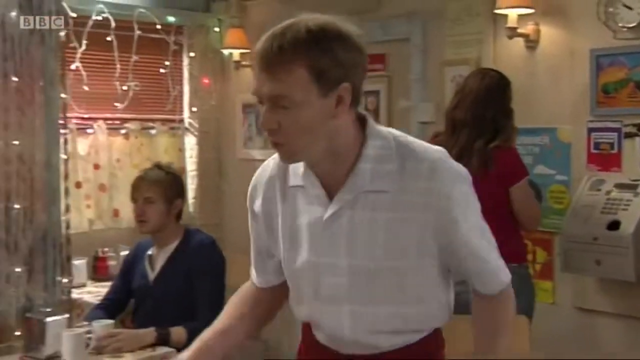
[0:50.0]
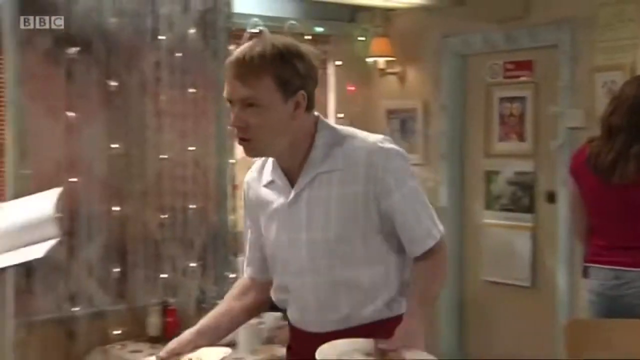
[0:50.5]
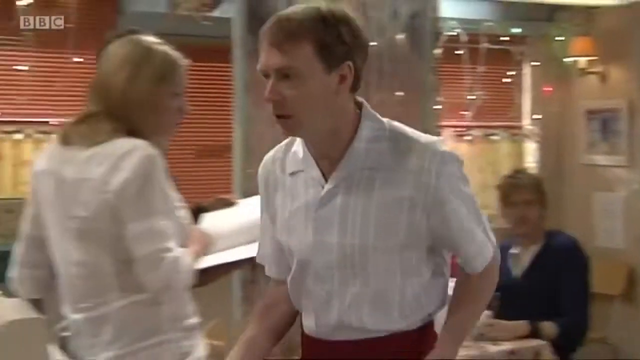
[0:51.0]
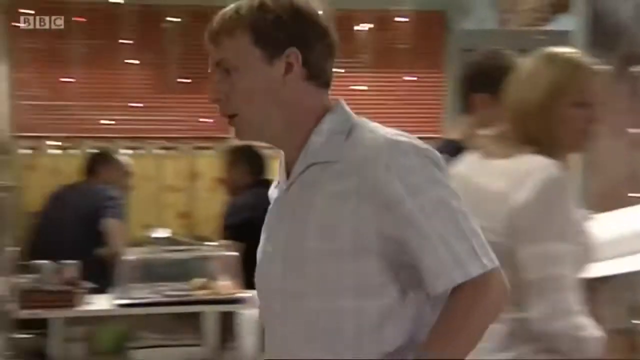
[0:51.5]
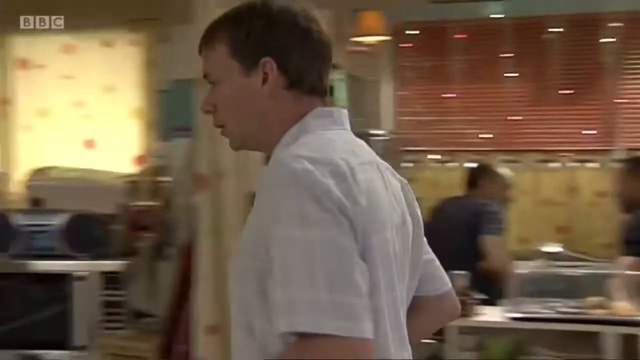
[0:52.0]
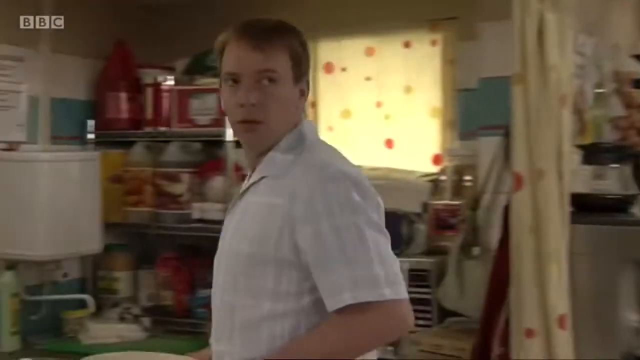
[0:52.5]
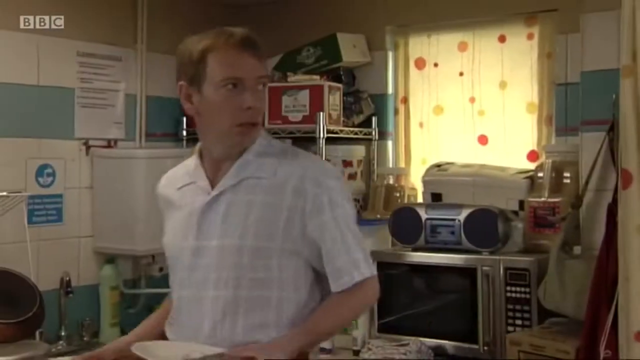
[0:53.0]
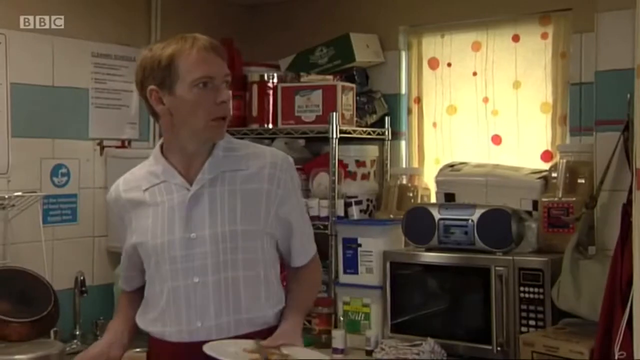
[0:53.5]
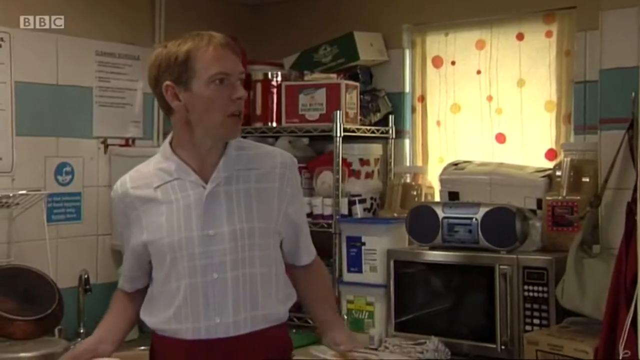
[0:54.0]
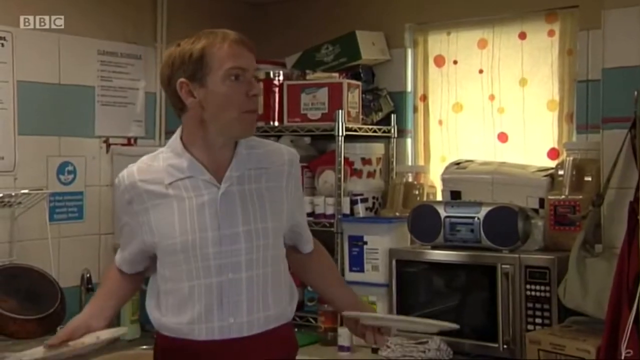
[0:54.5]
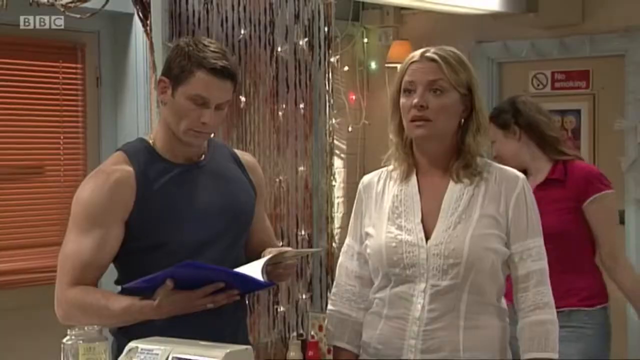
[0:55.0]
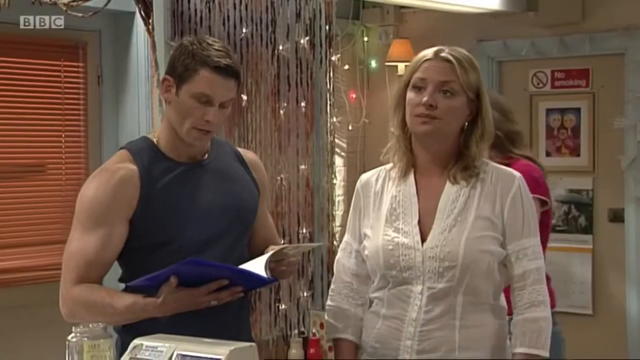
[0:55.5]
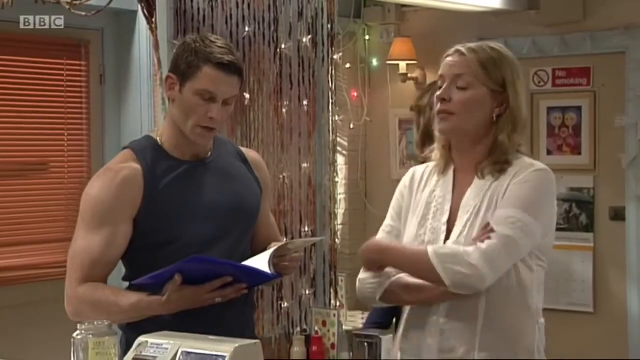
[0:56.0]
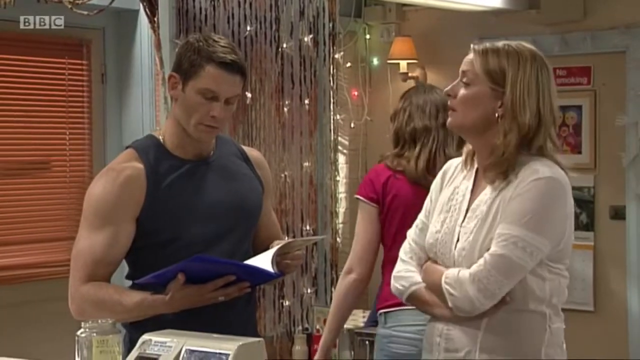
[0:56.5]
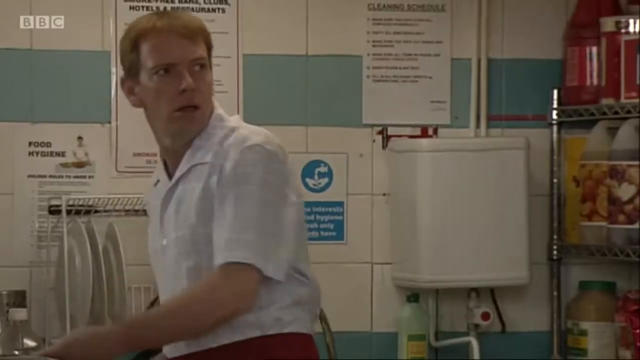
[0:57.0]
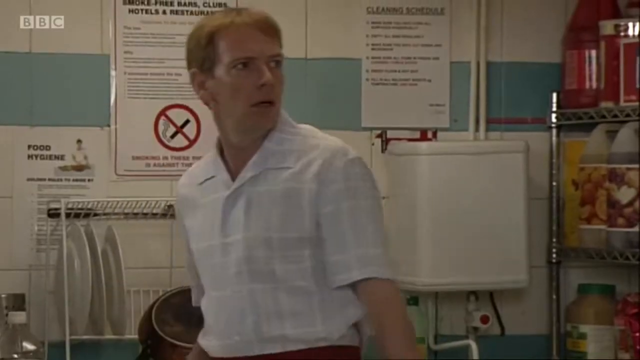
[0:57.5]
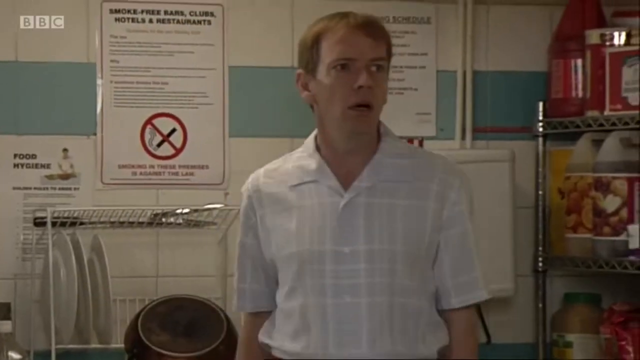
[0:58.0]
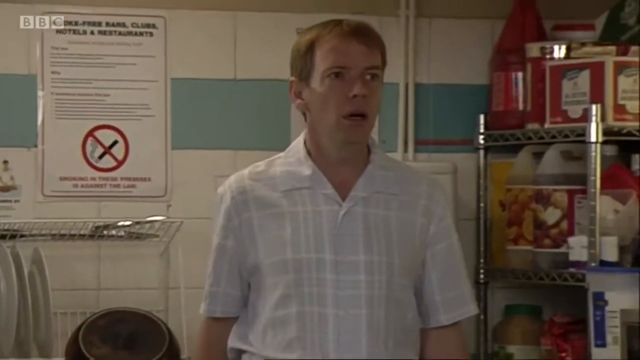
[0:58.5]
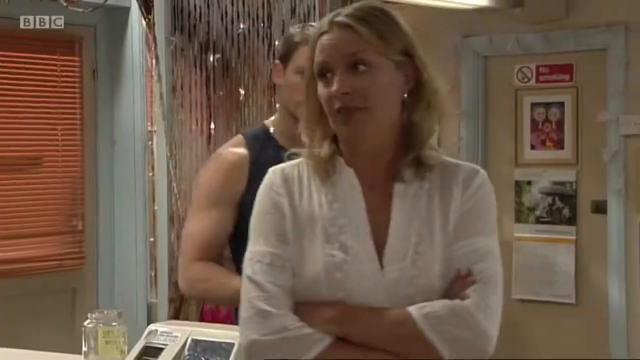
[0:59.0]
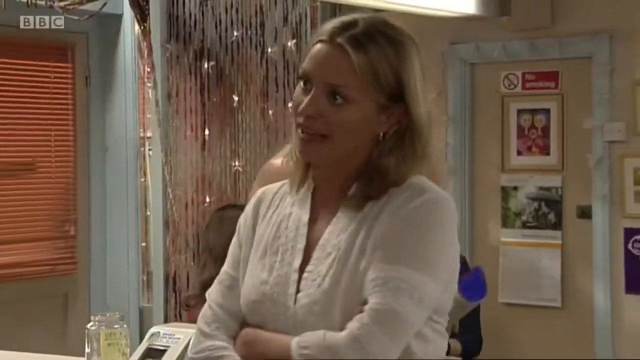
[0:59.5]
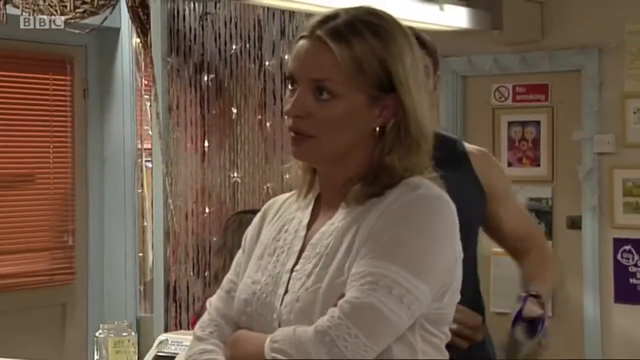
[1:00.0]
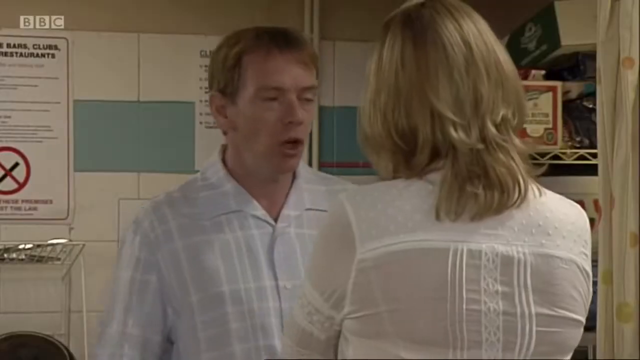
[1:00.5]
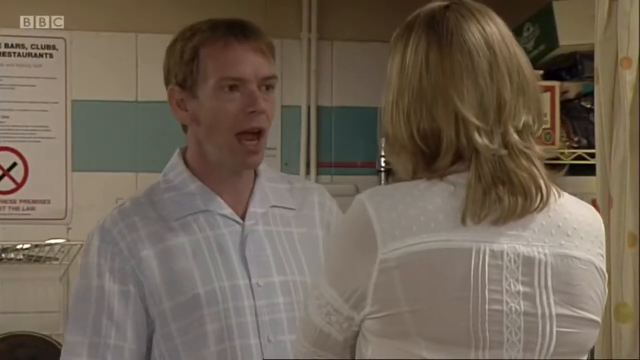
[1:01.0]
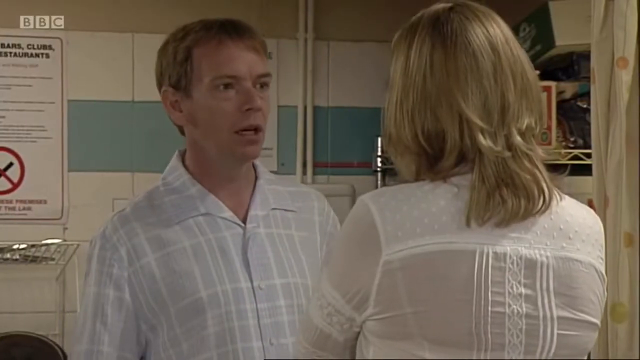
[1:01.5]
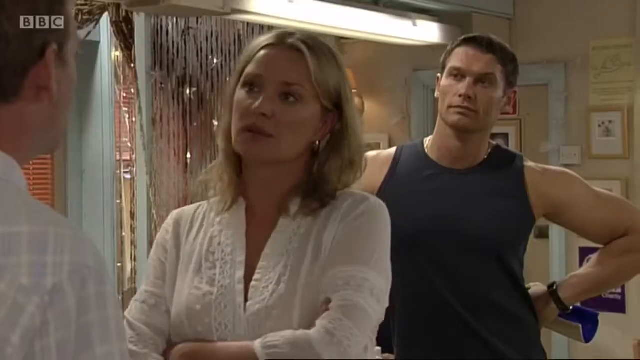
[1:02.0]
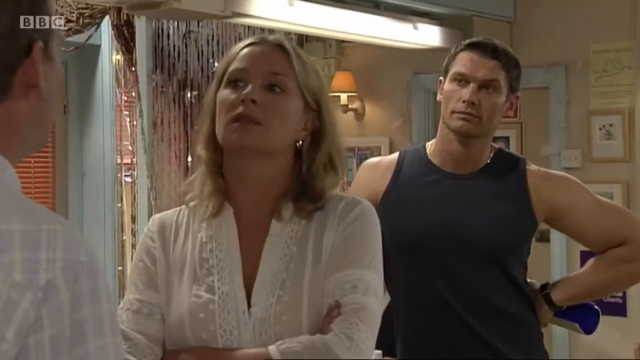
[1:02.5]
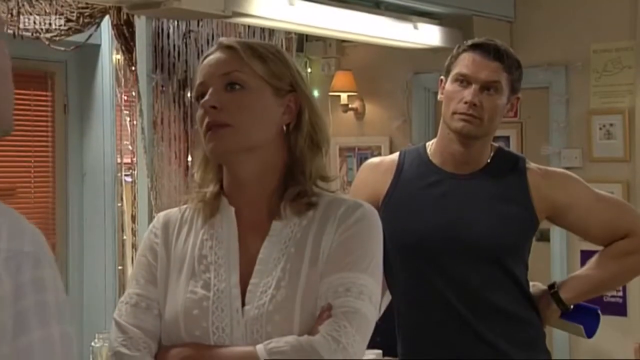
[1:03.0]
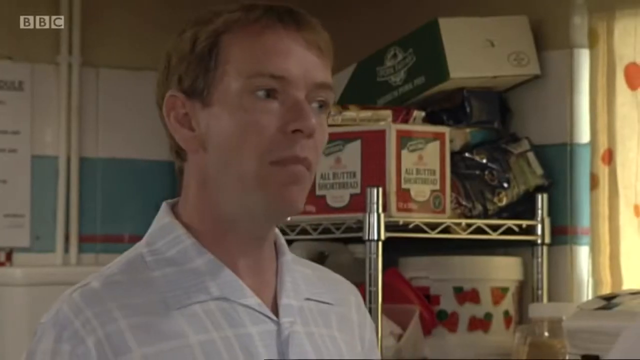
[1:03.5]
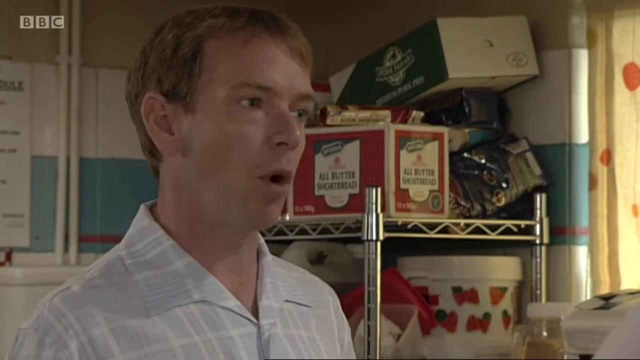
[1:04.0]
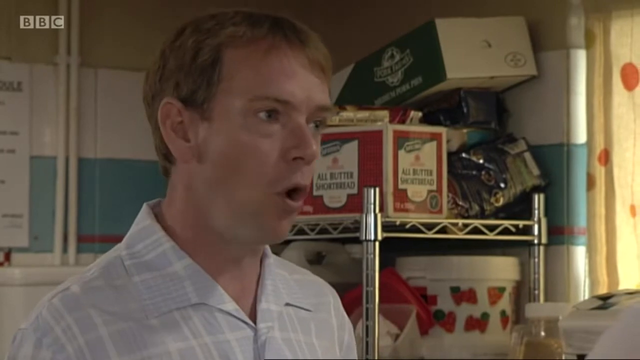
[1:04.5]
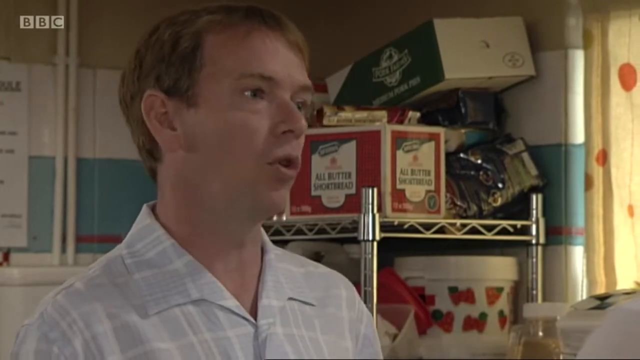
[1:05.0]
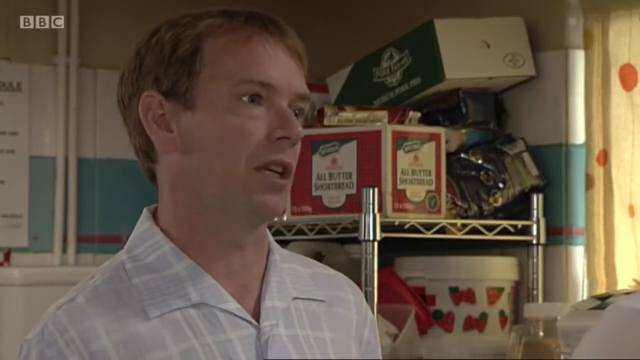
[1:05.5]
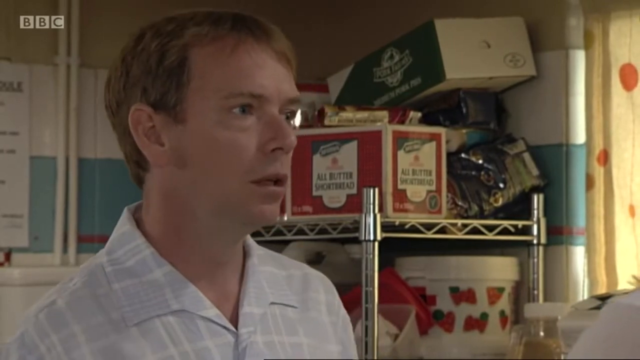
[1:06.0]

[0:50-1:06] The man in the T-shirt serves the customers, walking and carrying utensils. The woman in the white top is next to a man in a blue vest who is reading a blue book. She just stands there, then the two have an argument; the man is behind the woman, and there is a box behind the man. A TV, a microwave, a desk and do-not-smoke signs are visible. The man in the vest apparently is waiting in line. The customers are still seated, eating what they ordered. Utensils are in the back of the room, along with bottles with liquids. The woman folds her hands as the two have a heated conversation.